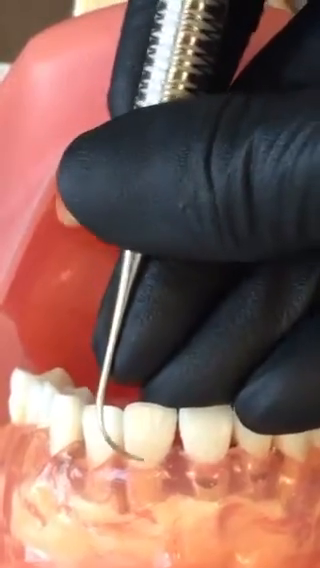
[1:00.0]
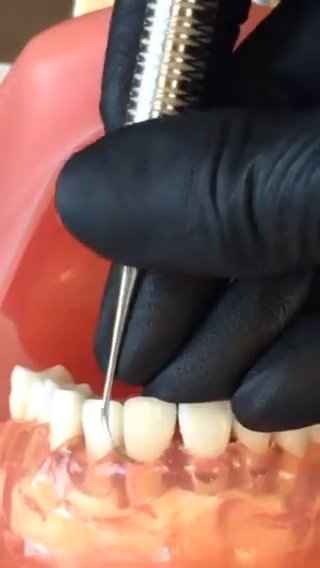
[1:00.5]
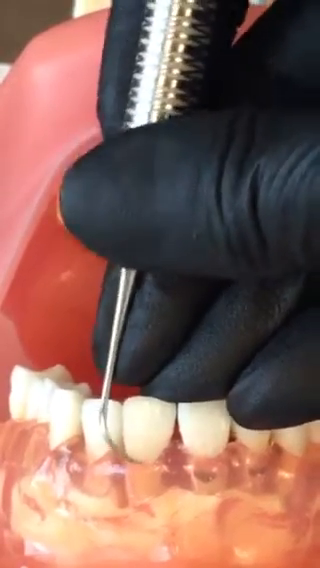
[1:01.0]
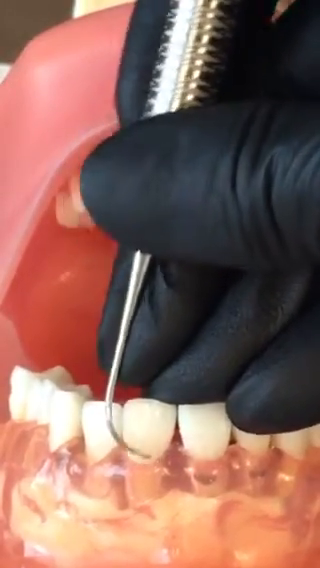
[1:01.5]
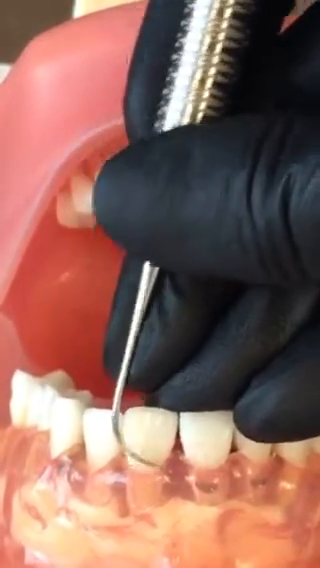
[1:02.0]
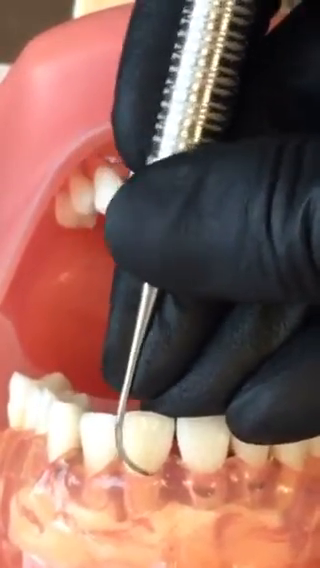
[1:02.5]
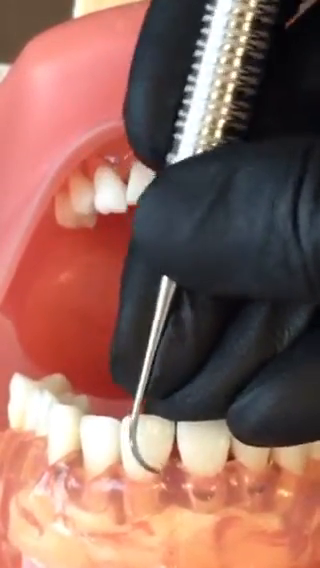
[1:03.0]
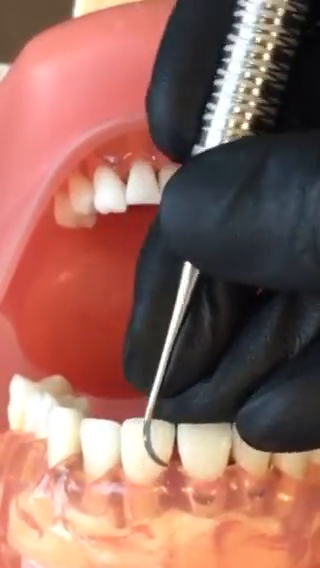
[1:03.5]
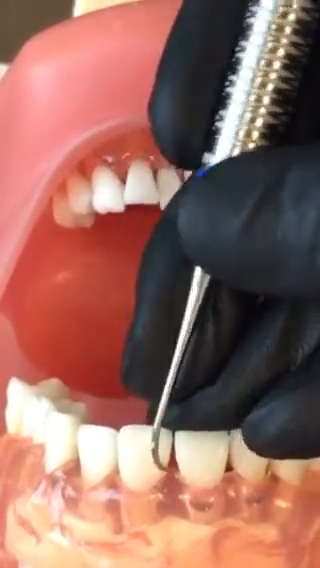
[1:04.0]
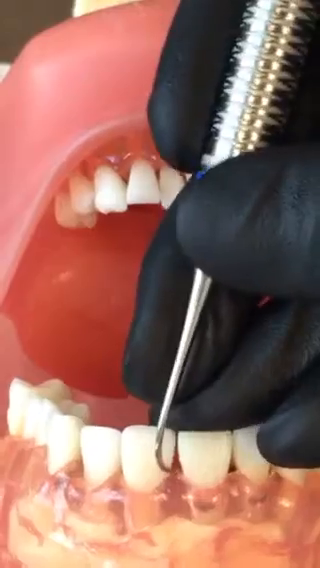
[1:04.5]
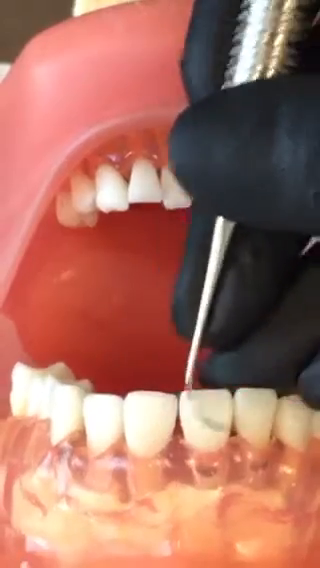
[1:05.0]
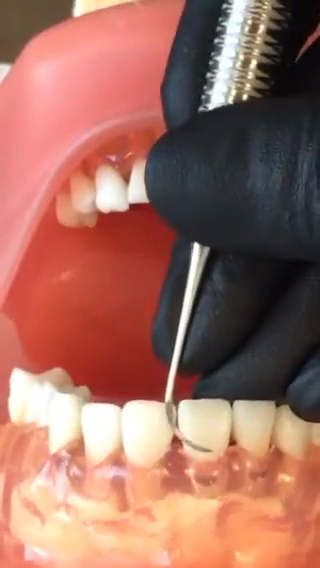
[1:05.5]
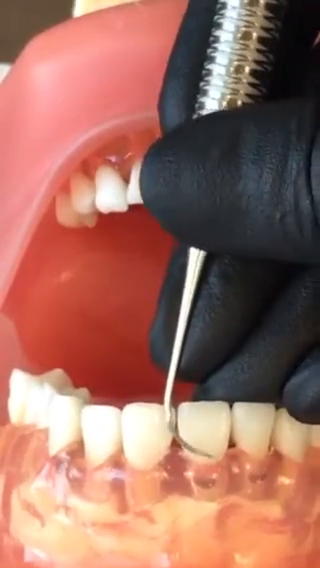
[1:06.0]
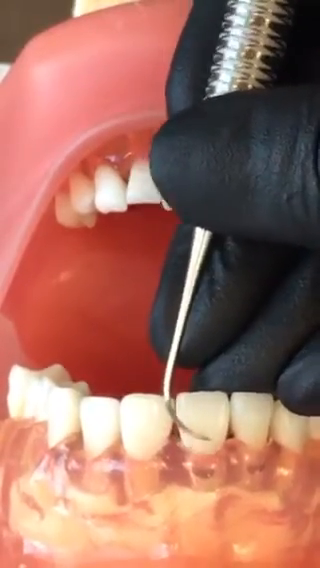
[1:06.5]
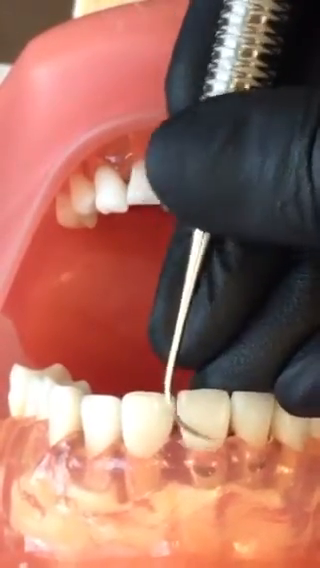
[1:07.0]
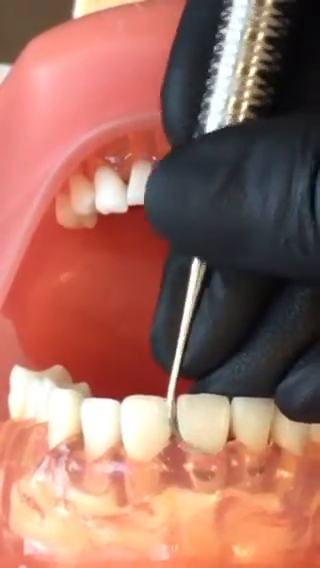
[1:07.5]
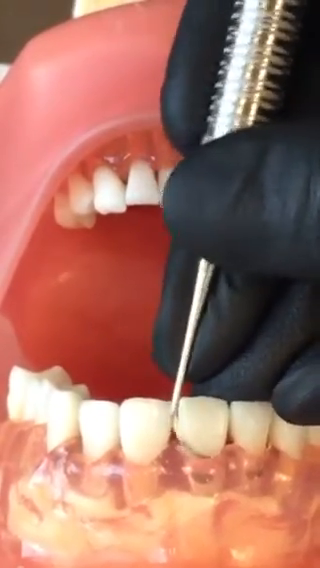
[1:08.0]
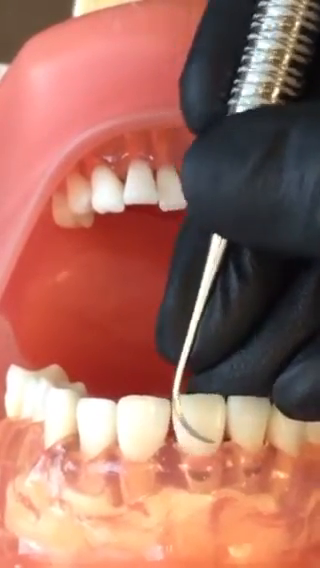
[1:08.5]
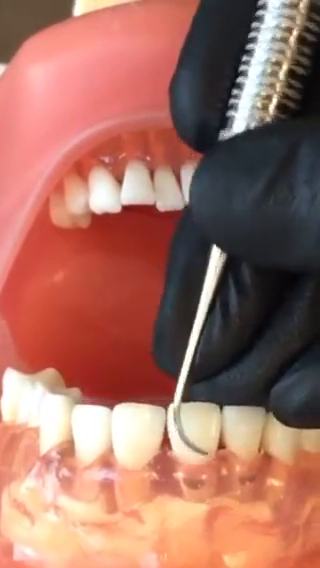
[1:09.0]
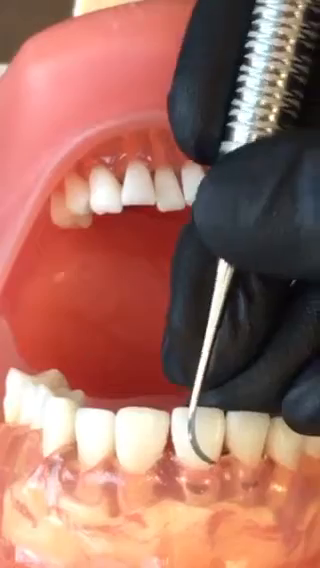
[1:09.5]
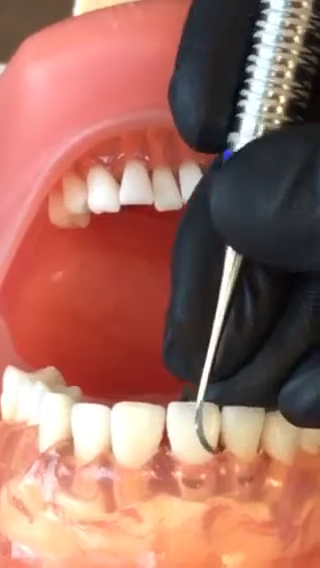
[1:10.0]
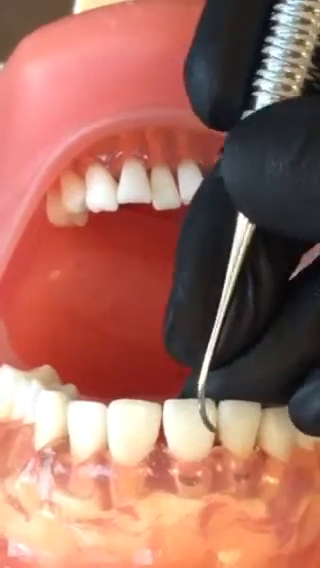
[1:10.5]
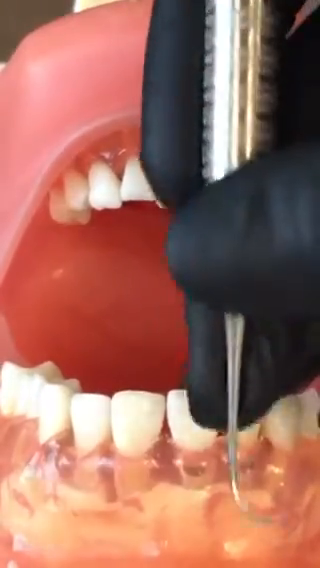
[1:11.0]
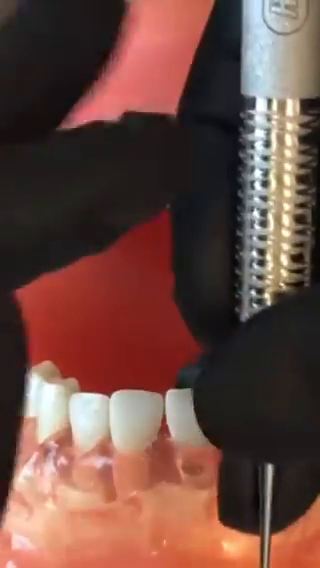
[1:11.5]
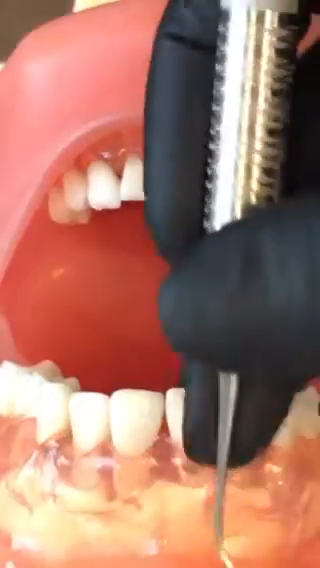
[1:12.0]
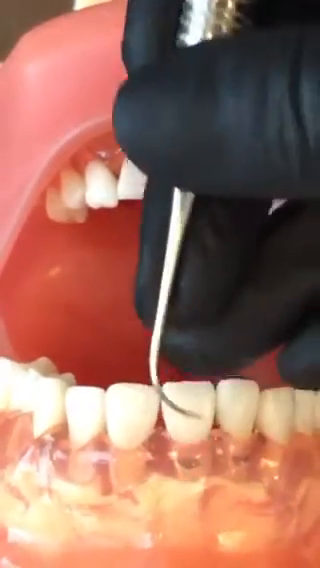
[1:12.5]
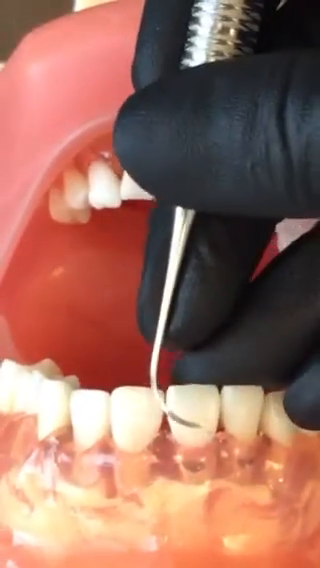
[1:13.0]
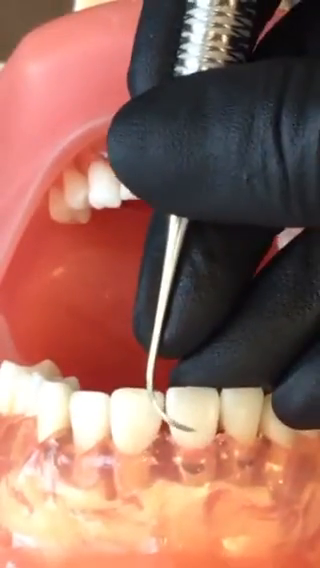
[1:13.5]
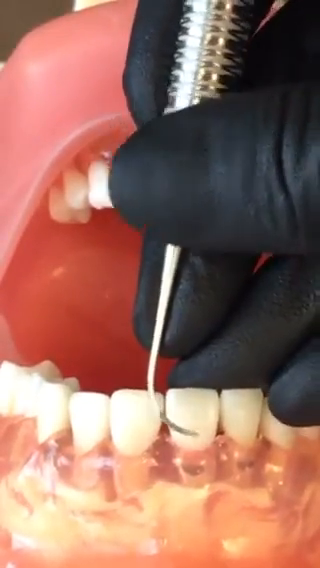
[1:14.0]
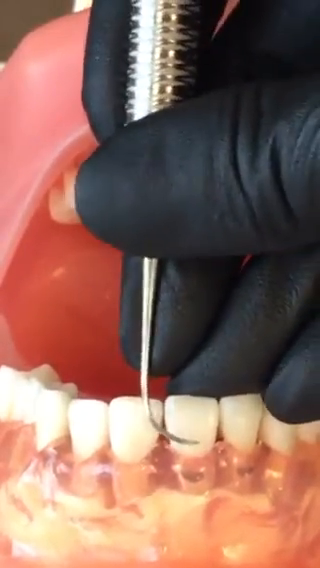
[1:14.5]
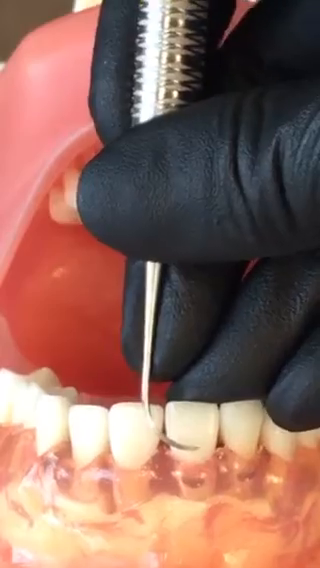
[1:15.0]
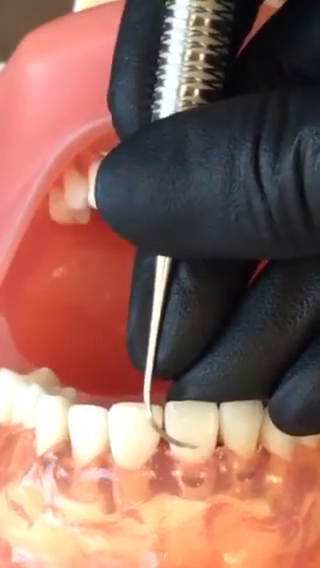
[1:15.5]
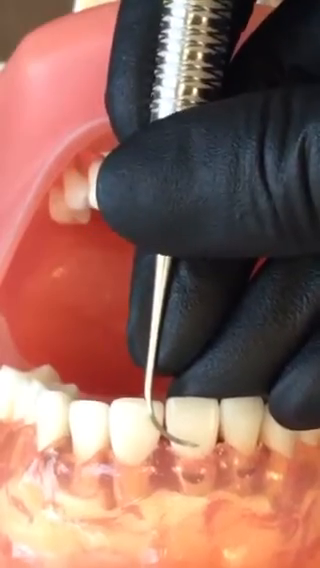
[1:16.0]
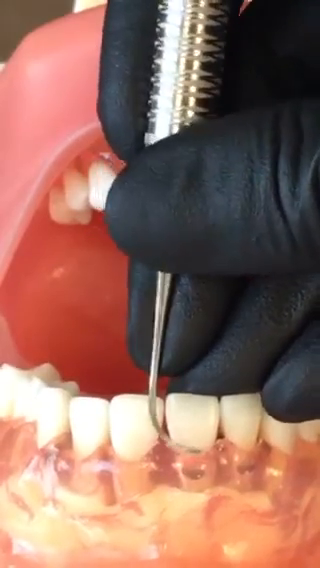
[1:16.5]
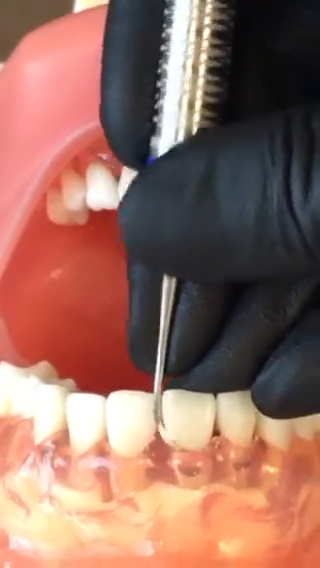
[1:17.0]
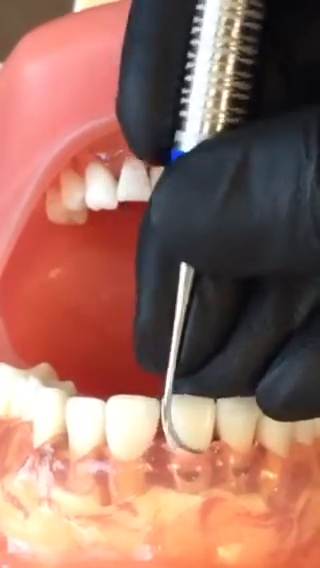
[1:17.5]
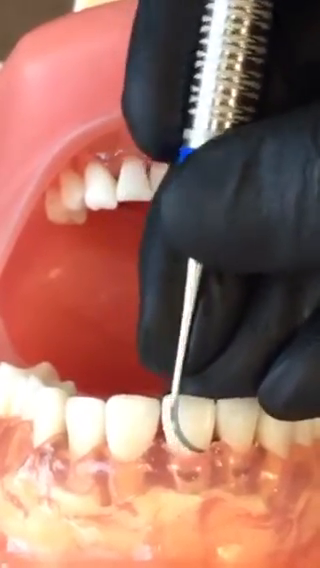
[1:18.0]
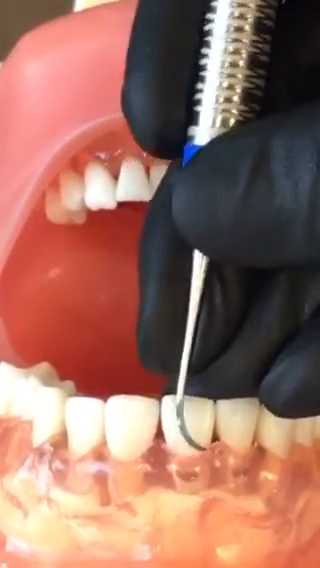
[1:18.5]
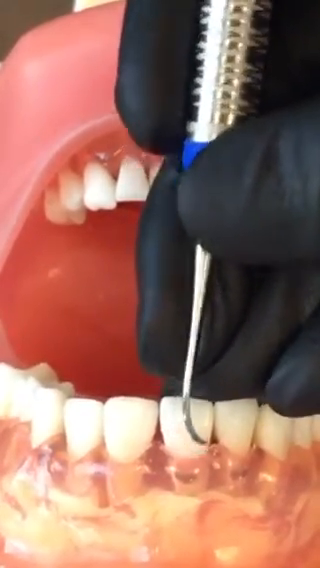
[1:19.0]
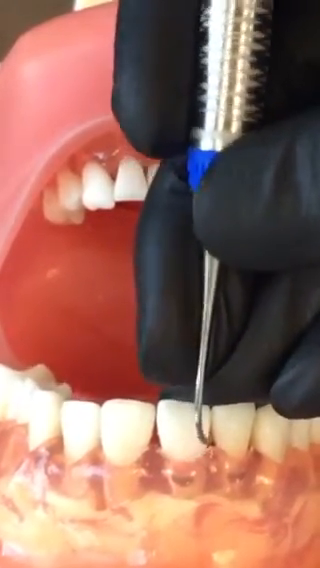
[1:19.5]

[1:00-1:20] The motion reverses: instead of moving to the left, the cleaning now goes backwards, still on the two front incisors, cleaning both again. This time it does not clean in the gap between them, only each tooth separately, with the motion now moving to the right. Each tooth is scraped maybe six or seven times, only close to the gum line rather than along the whole length of the tooth. The dental student then stops, taps their other hand, and continues the scraping motion until the end.